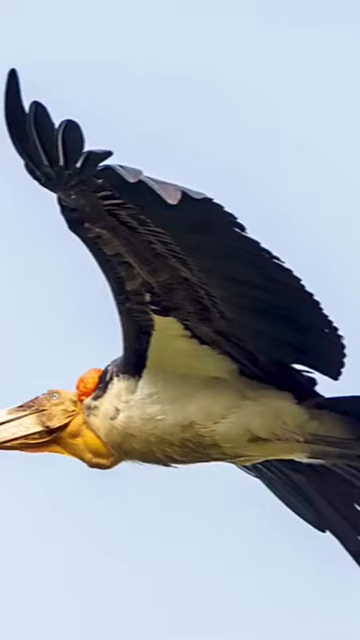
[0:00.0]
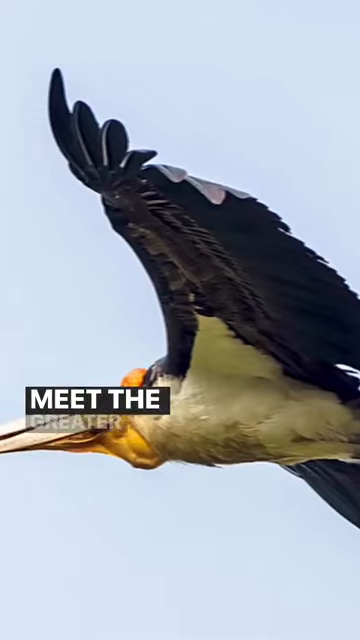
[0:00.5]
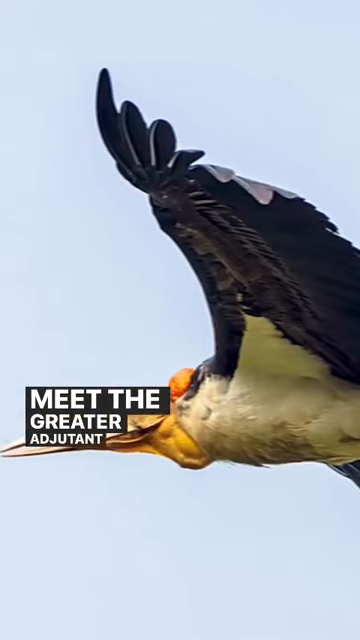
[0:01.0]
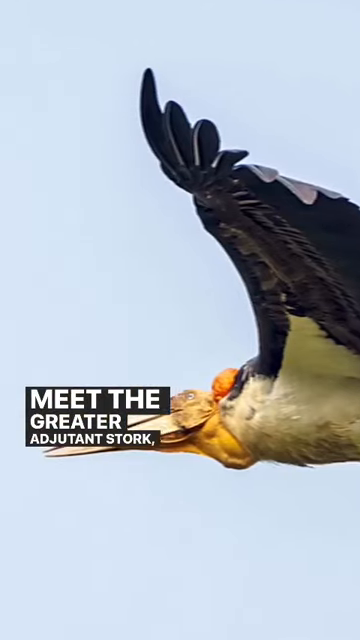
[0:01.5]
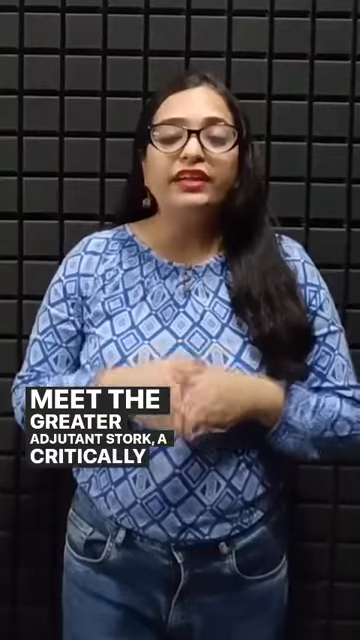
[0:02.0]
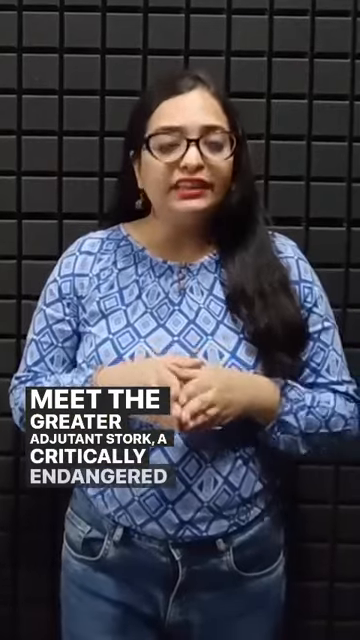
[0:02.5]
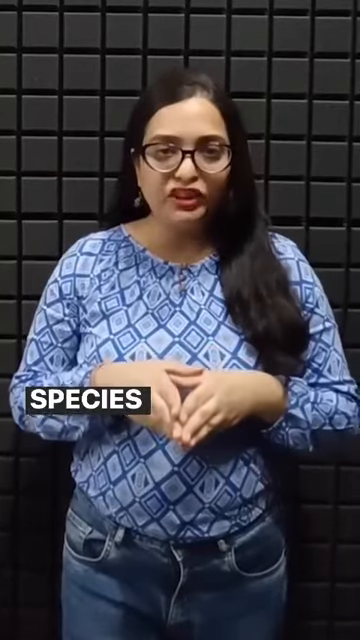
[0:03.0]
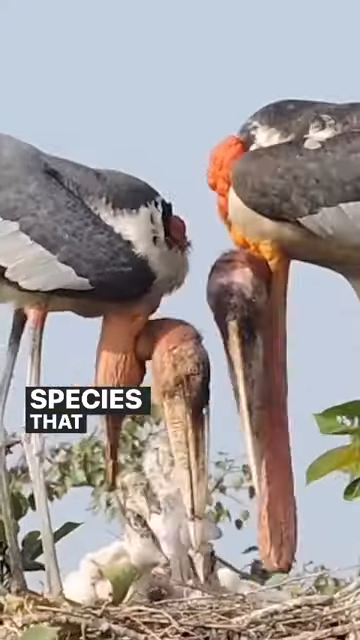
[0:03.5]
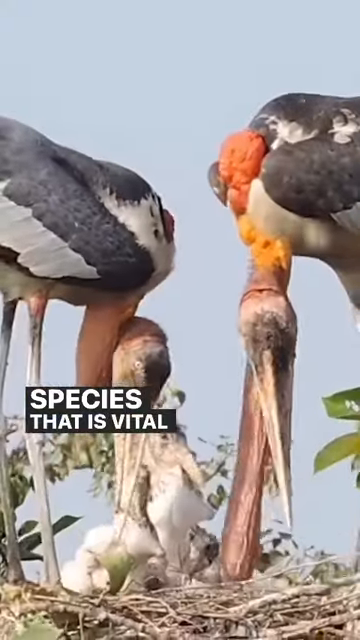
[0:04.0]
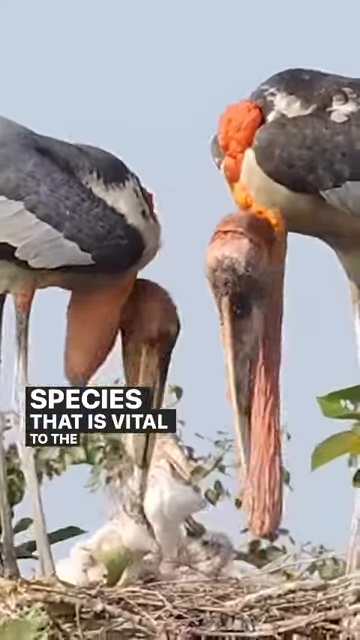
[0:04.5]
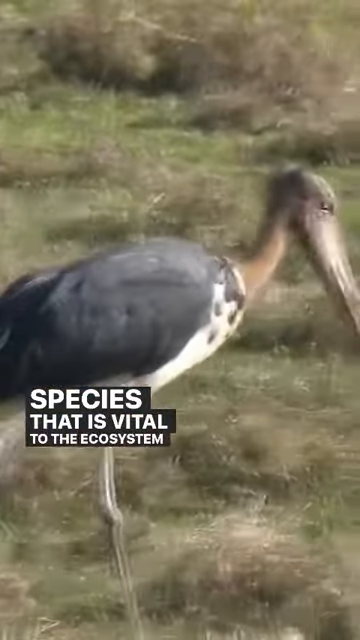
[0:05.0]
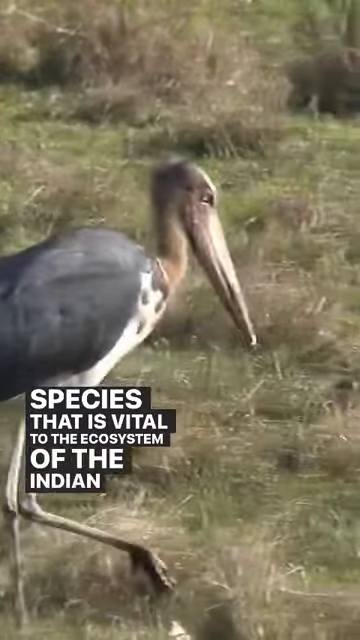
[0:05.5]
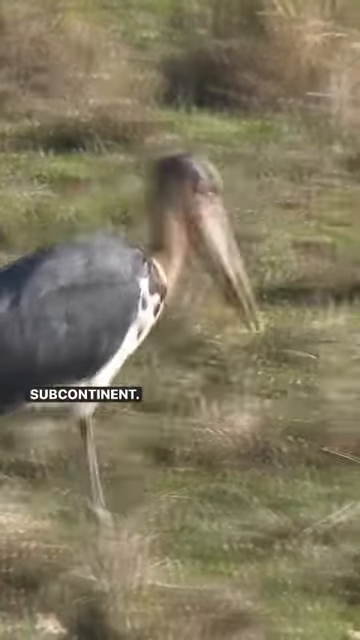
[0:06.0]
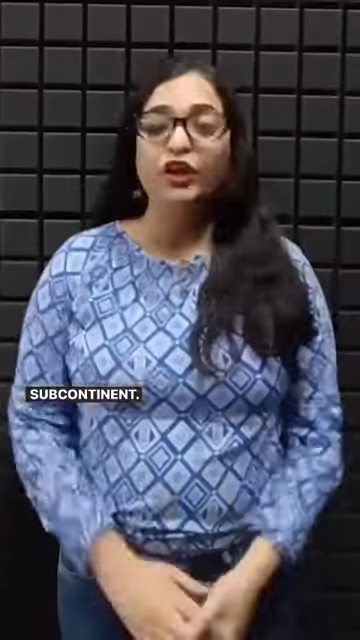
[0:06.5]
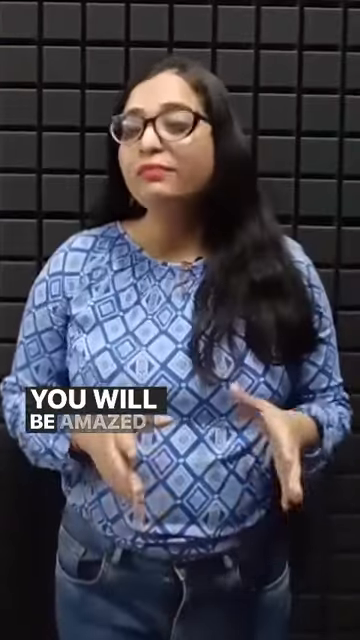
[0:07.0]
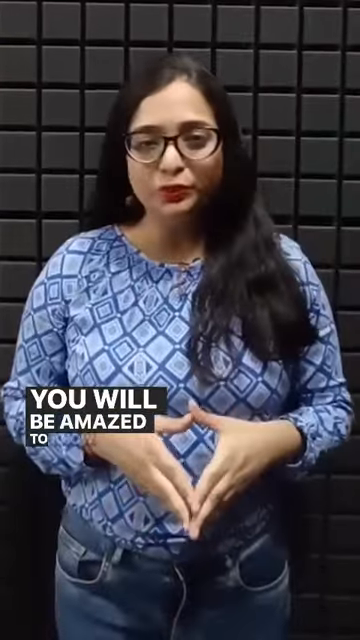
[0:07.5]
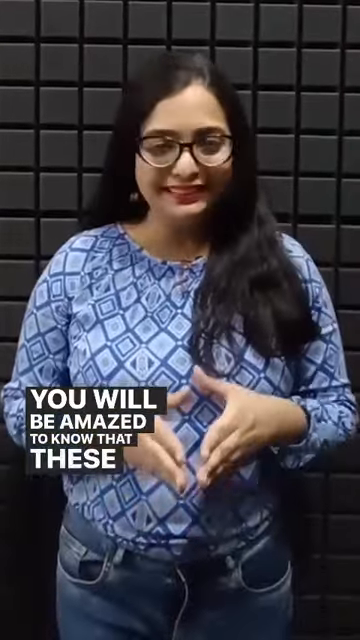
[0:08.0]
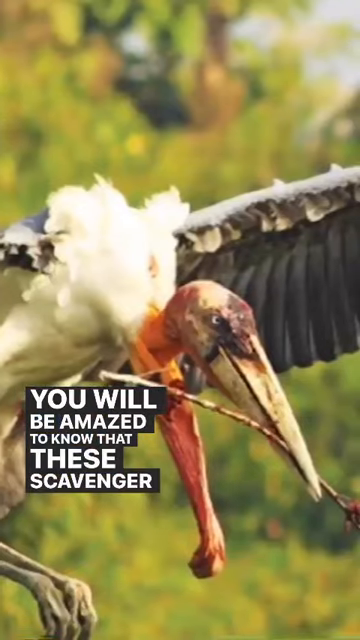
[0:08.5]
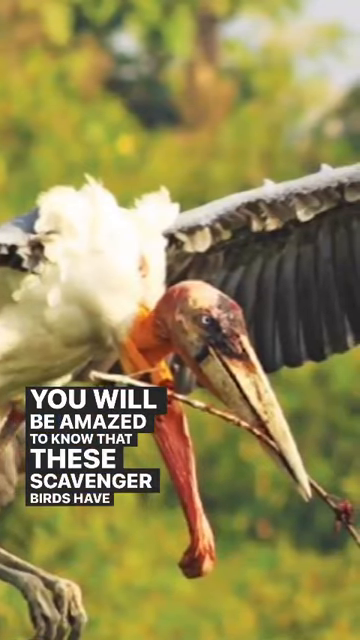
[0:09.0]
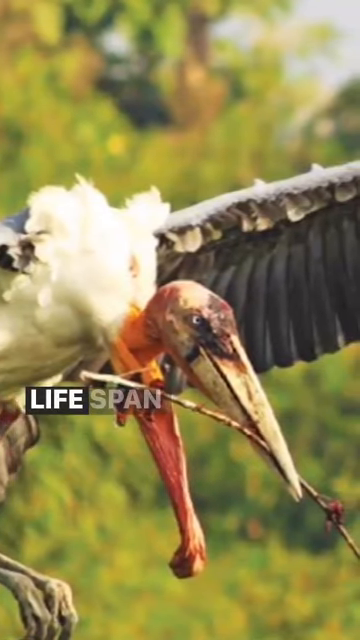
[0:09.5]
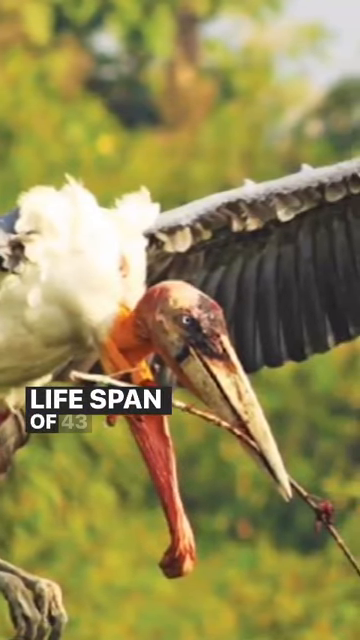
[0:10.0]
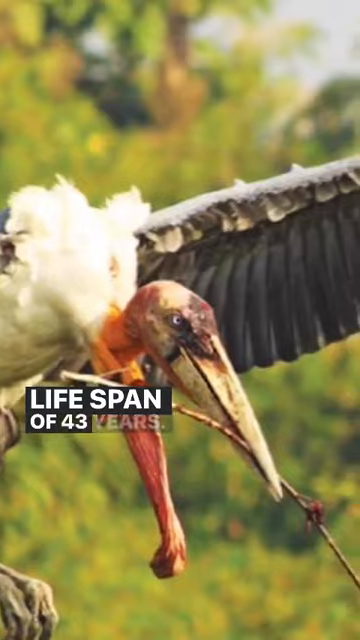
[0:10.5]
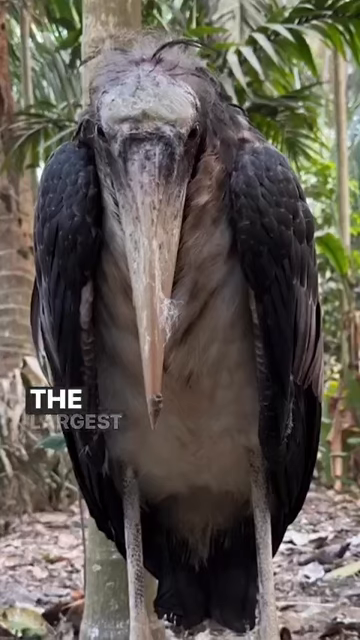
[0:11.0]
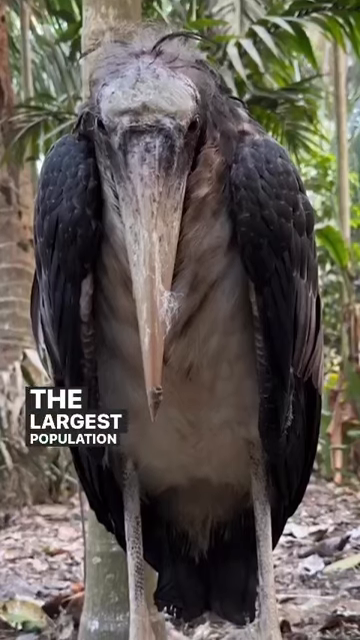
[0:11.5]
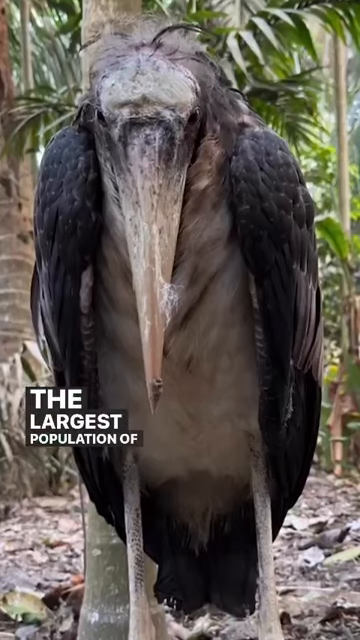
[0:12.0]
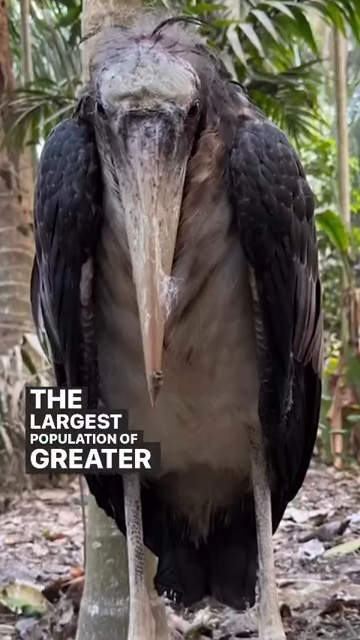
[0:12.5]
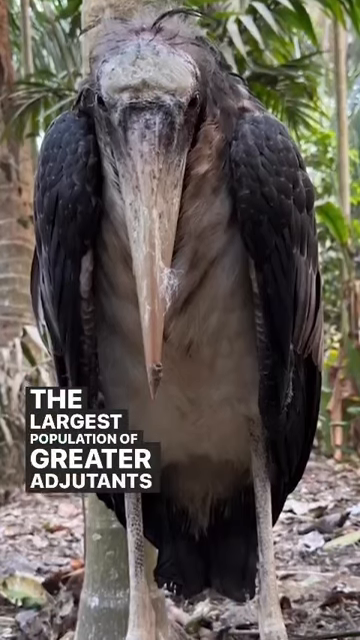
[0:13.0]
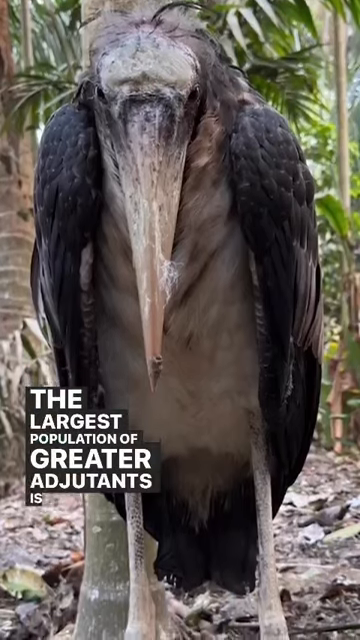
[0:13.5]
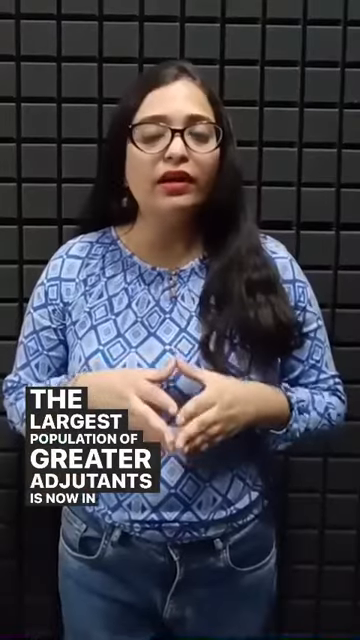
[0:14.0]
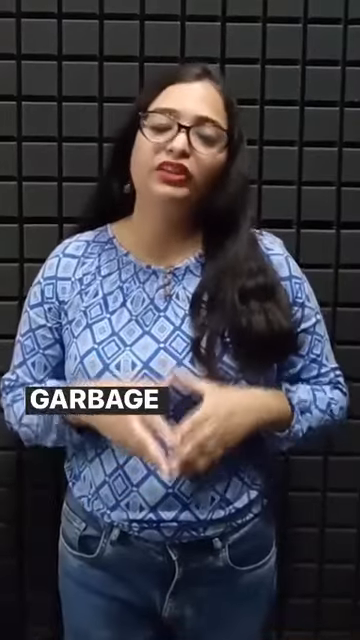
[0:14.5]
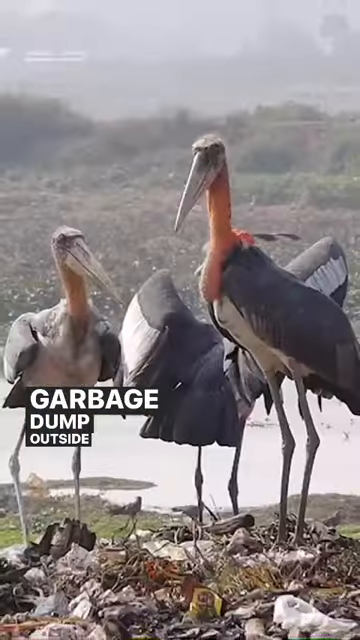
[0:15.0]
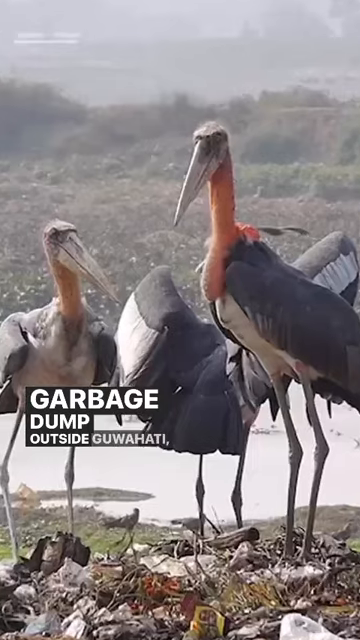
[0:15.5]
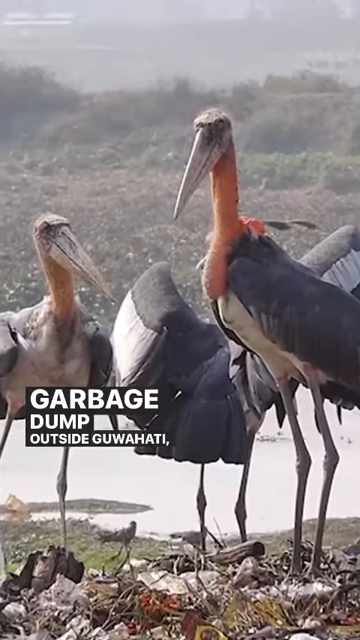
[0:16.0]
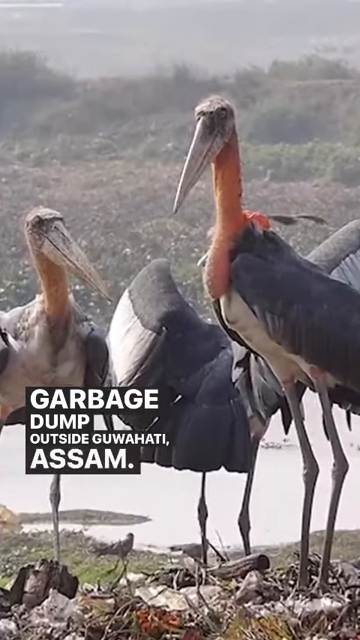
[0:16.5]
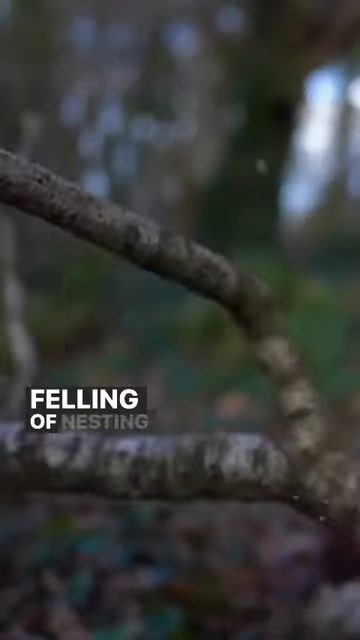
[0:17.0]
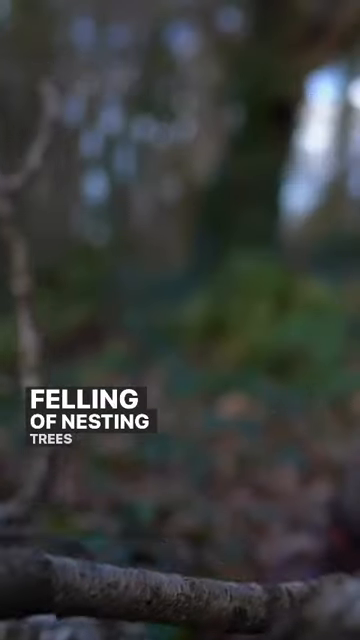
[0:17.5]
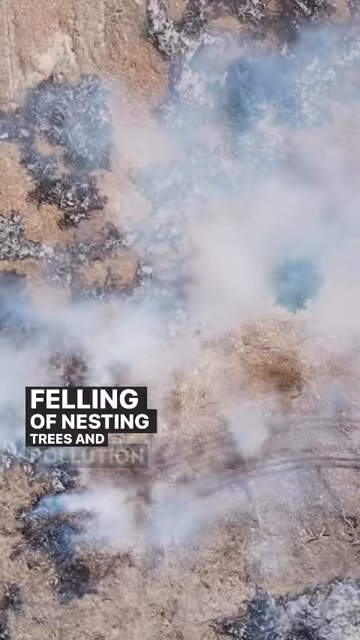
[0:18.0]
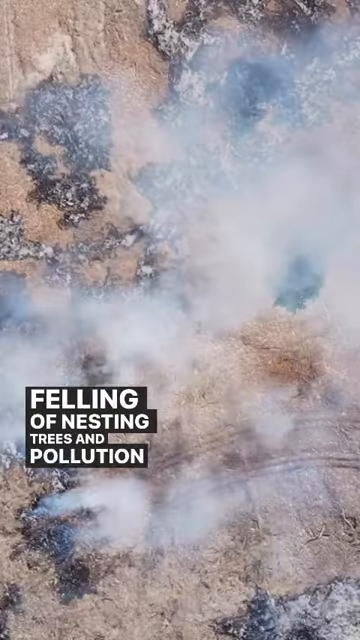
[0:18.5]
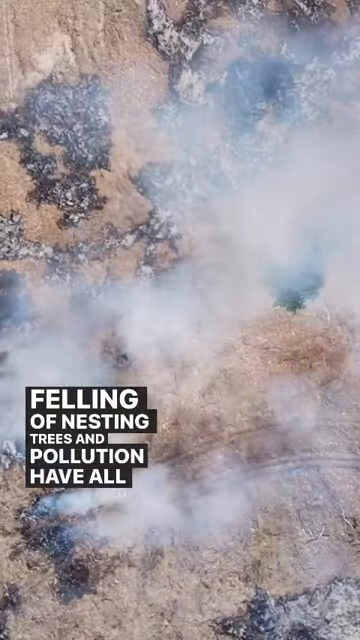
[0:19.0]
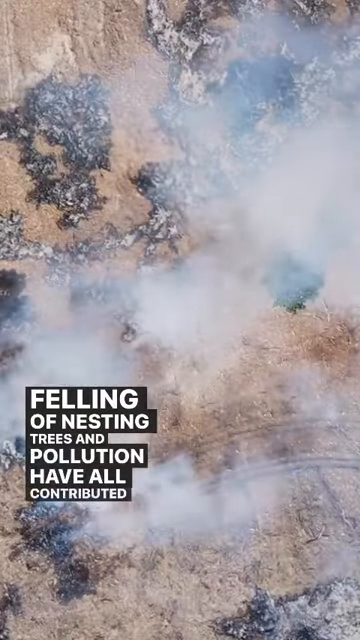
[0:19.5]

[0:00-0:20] A very large bird with a very large wingspan soars in the sky. It has black wings, a white body and an extremely long beak, and the underside of the beak appears to be yellow. On-screen text reads: "meet the greater Adjutant stork, is a critically endangered species that is vital to the ecosystem of the Indian subcontinent." A woman says, "you will be amazed to know that these scavenger birds have a lifespan of 43 years. The largest population of greater Adjutants is now in a garbage dump outside of Guwahati, Assam. The felling of nesting trees and pollution have all contributed to the decline in population." Pictures follow, showing the bird walking; it looks quite intimidating and quite large.